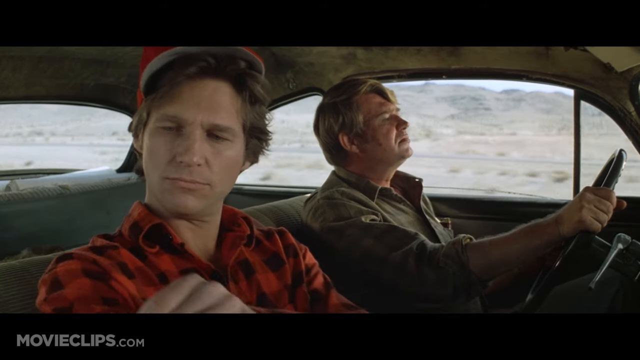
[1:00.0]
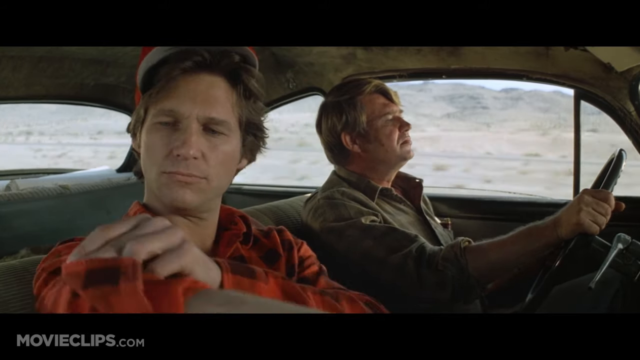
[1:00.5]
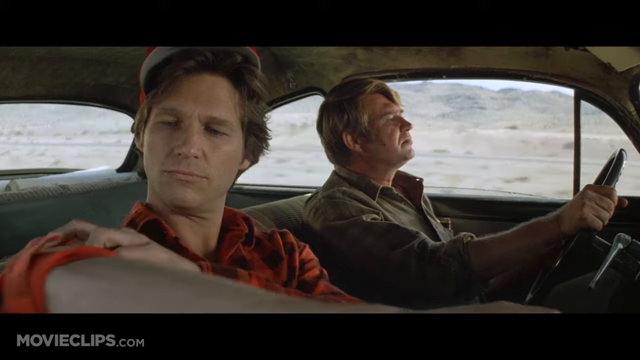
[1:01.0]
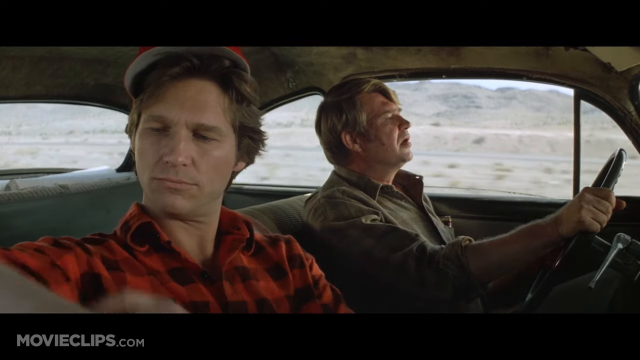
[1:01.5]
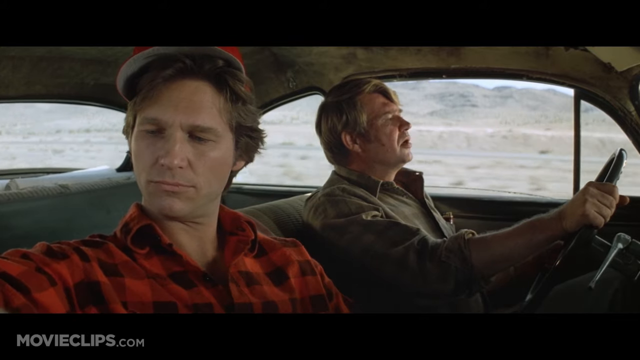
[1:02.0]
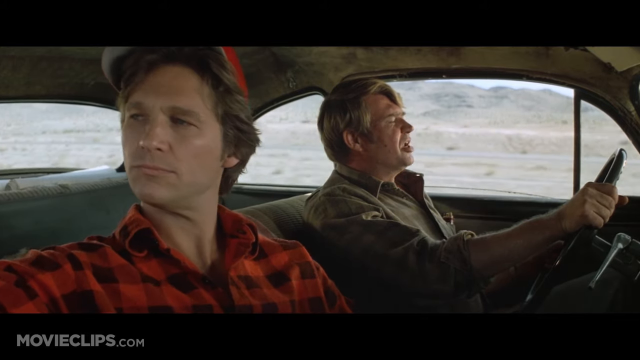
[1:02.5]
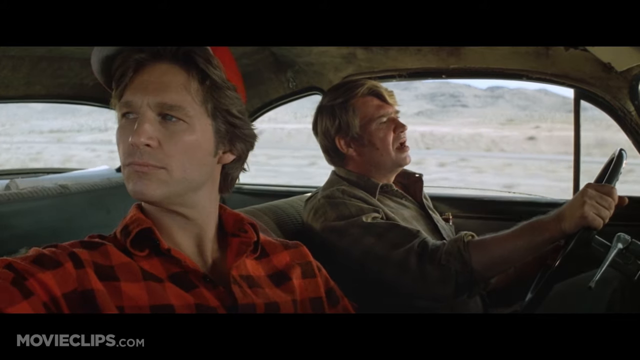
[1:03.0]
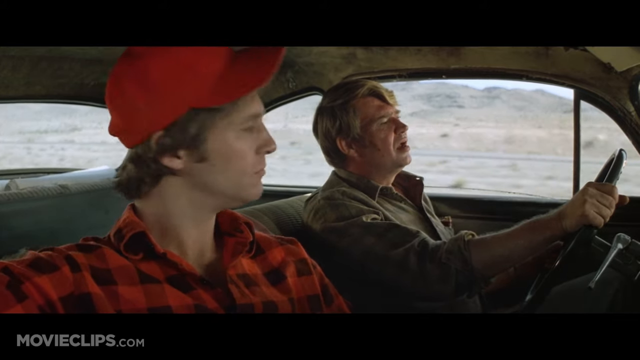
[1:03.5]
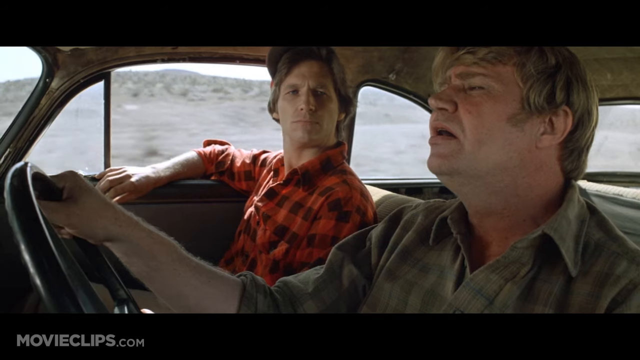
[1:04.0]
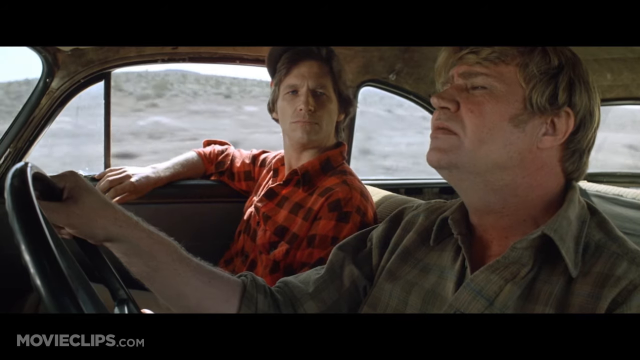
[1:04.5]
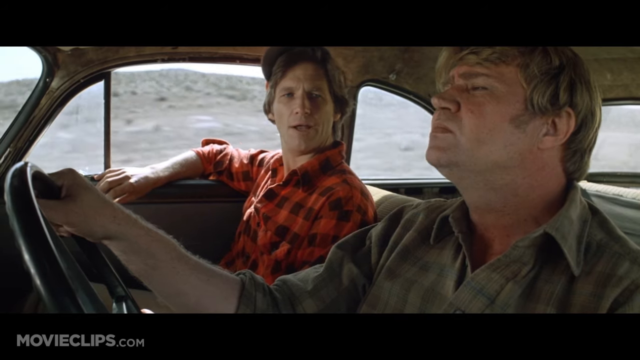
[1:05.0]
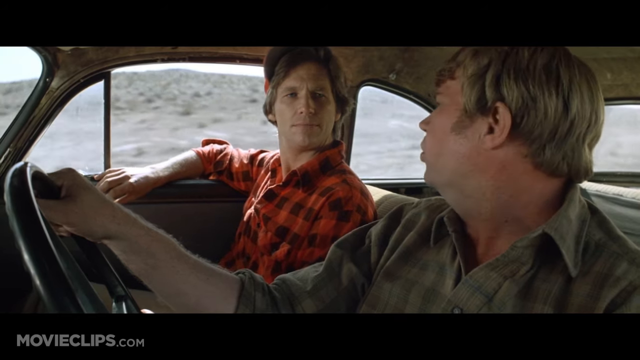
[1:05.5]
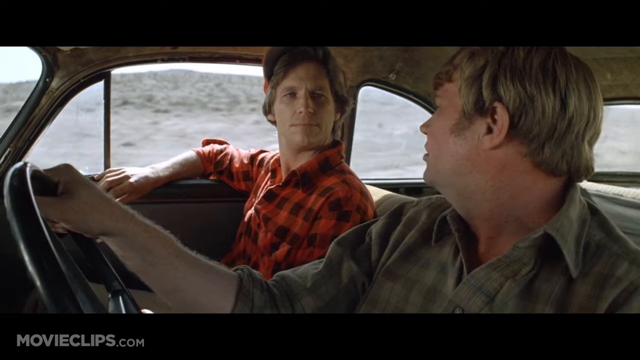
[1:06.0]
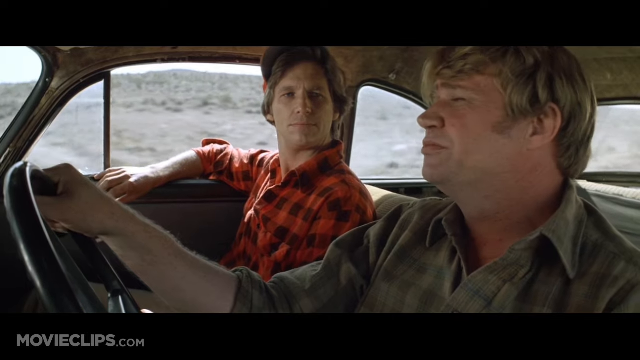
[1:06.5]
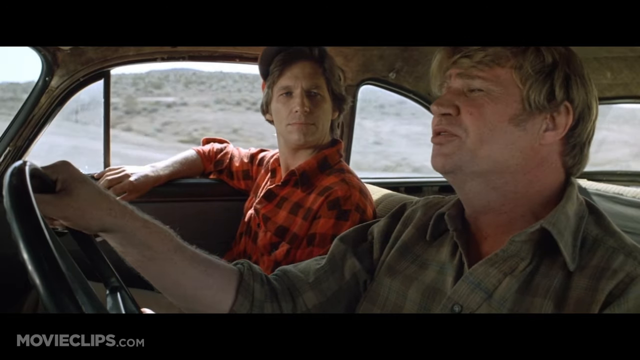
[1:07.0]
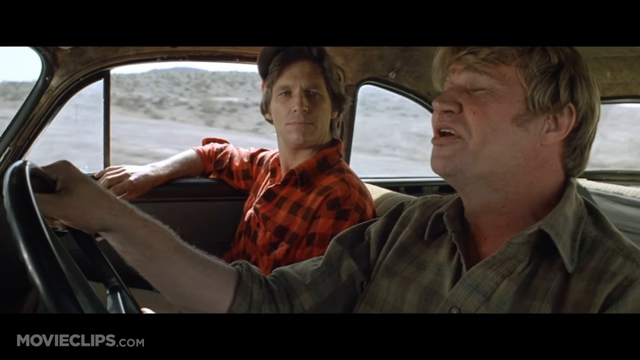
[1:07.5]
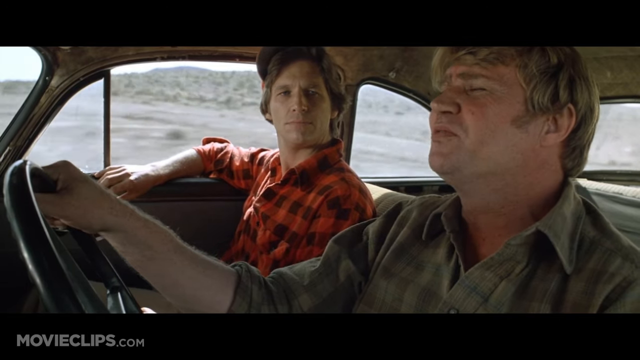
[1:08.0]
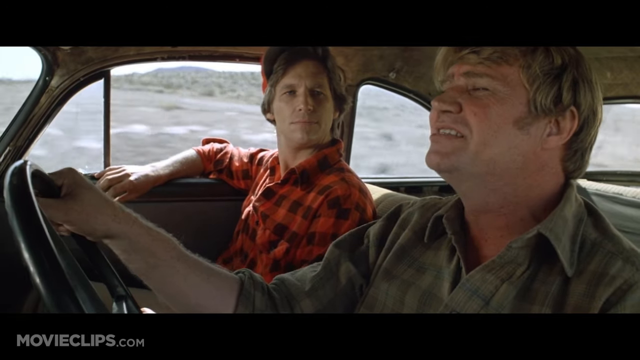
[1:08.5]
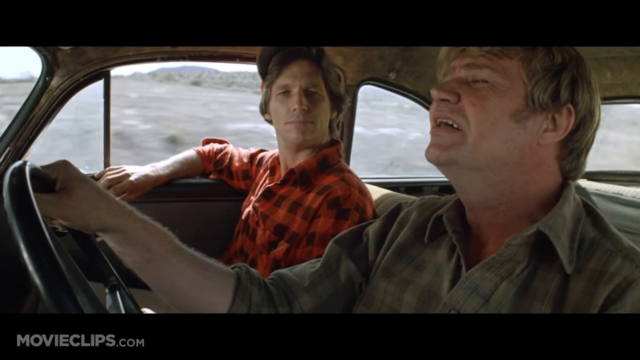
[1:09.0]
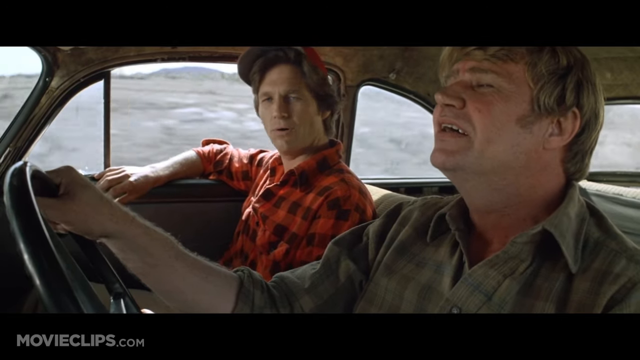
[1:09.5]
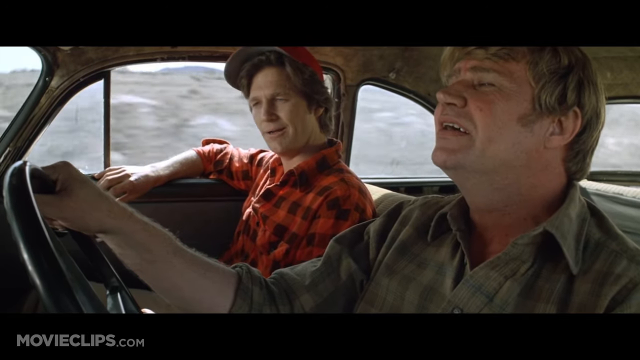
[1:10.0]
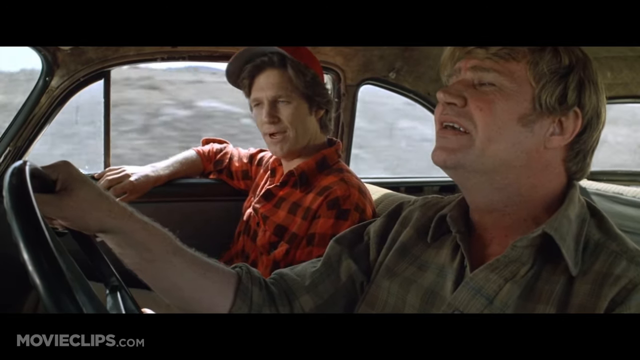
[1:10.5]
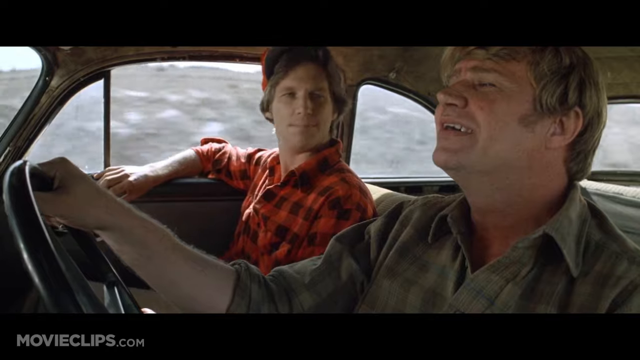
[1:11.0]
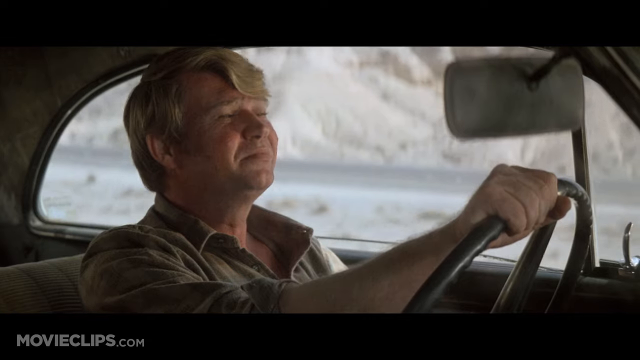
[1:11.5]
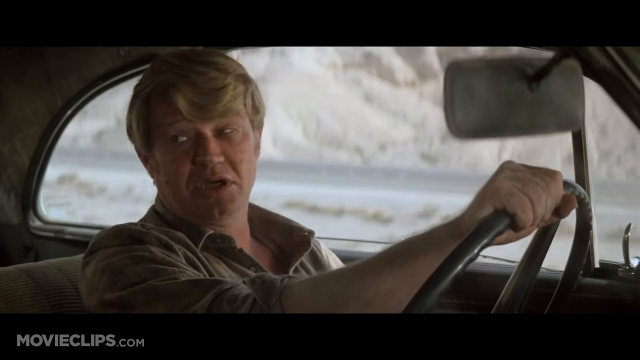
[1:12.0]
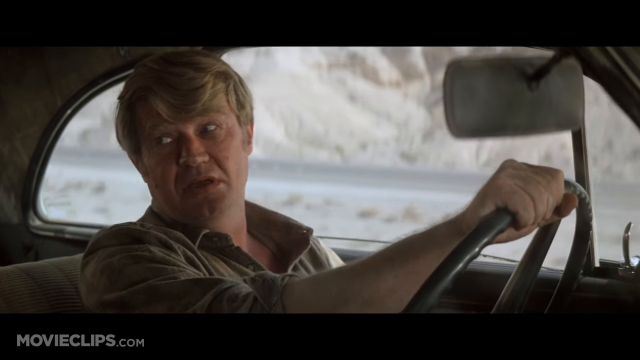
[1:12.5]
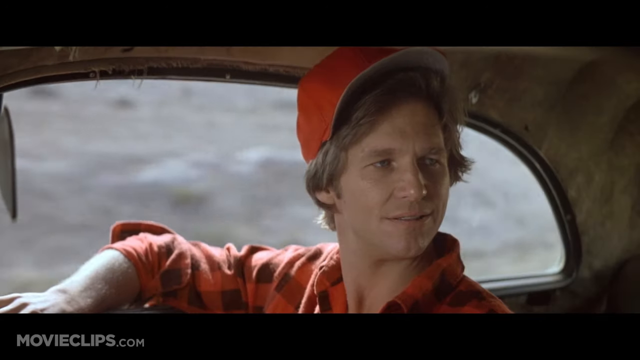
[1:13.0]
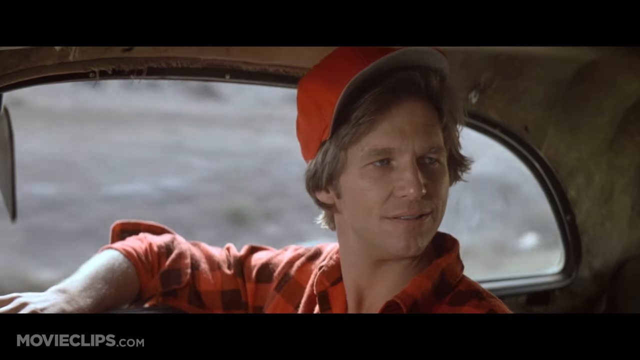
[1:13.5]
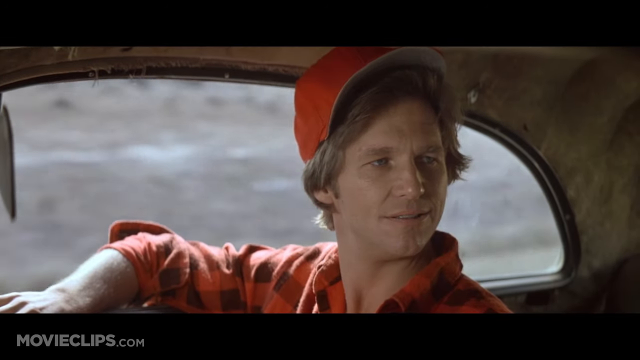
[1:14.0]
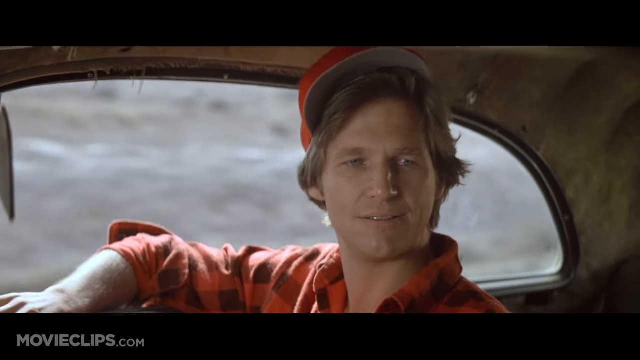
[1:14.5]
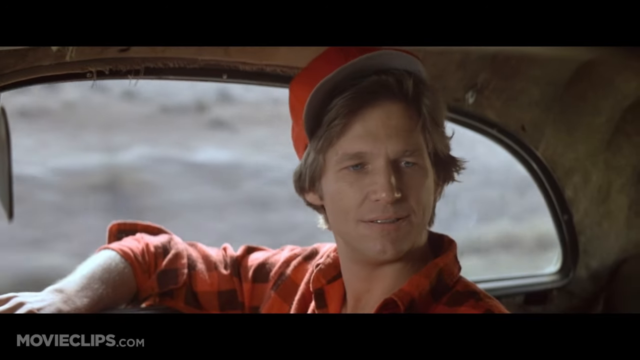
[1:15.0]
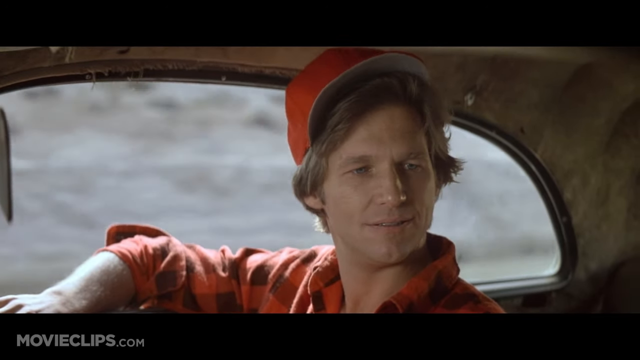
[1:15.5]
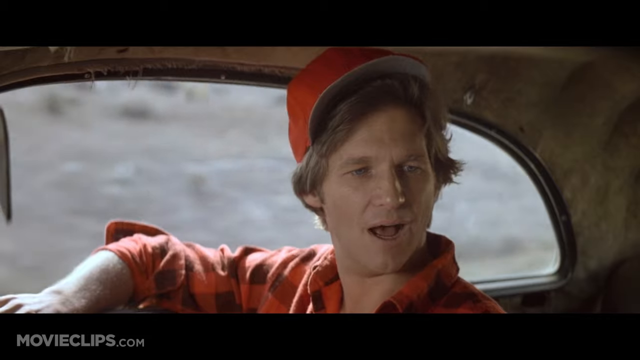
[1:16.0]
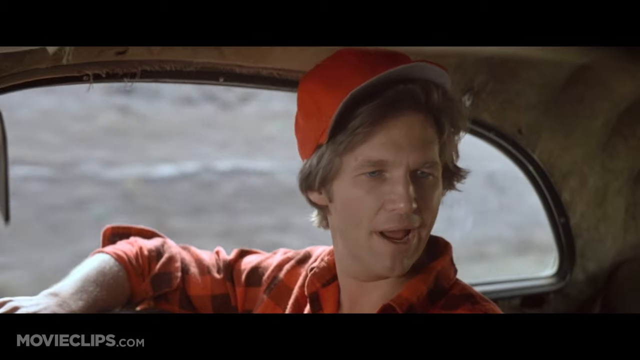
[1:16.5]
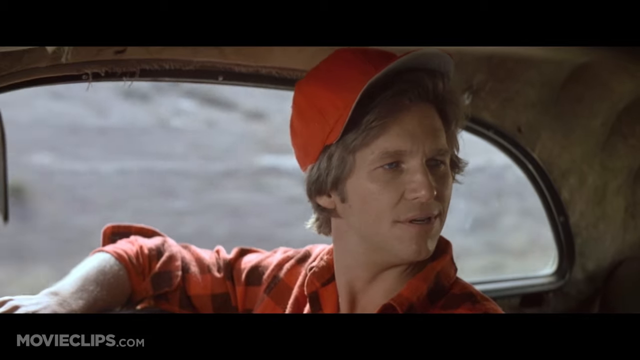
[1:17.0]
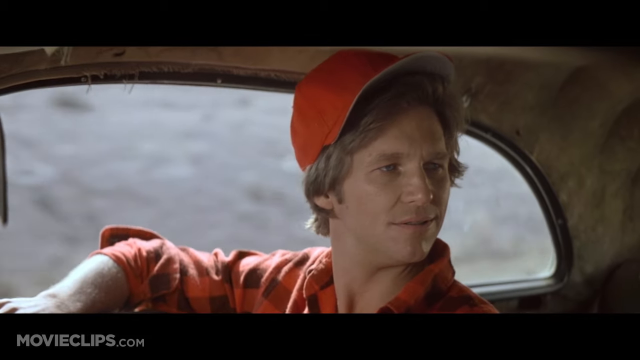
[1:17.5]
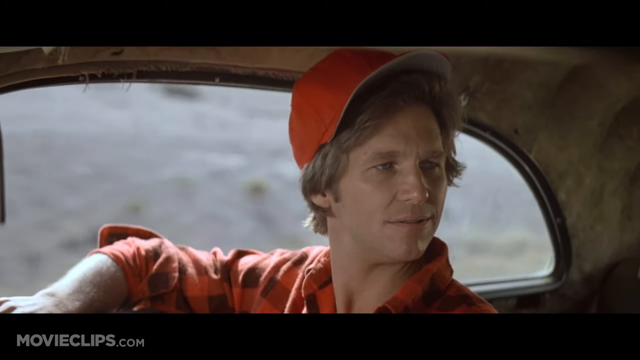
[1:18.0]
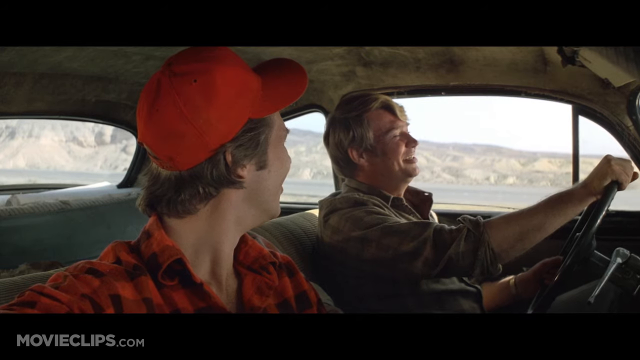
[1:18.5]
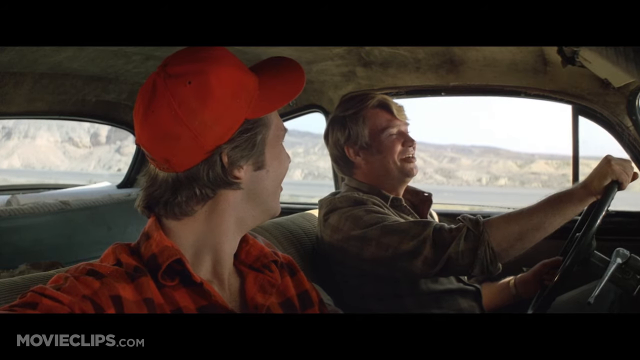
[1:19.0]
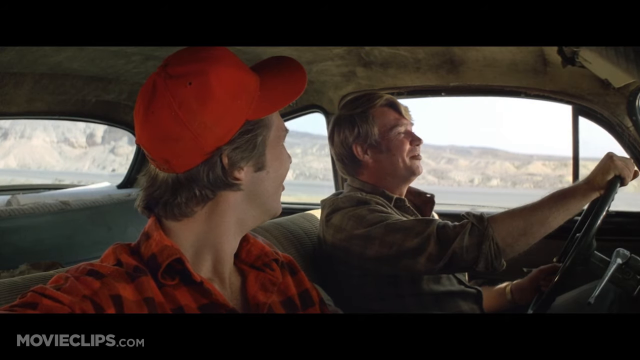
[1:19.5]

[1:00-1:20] Two men, one old and one middle-aged, drive on the road. The middle-aged man wears a red cap and a red shirt, and the old man wears a green shirt. The old man looks to be between 65 and 75 years old, and the younger man looks to be between 25 and 38. They seem to be driving well and chatting along the way, and they look like they are going on a long drive. The younger man seems to be doing his own thing and not talking much, only responding after the older man starts a conversation. Their car looks like a very old car.